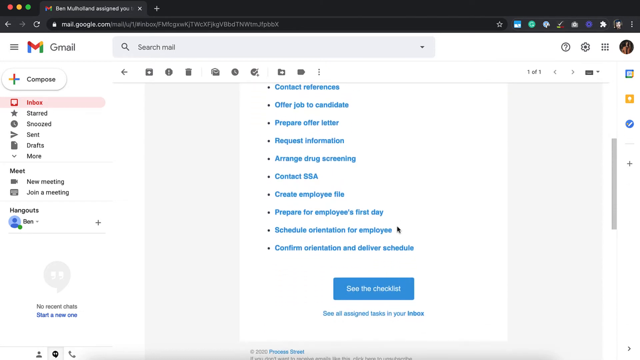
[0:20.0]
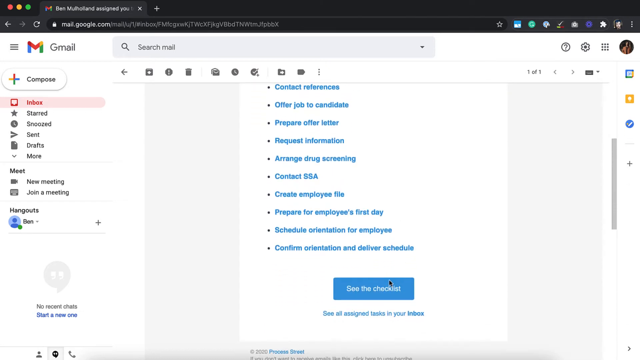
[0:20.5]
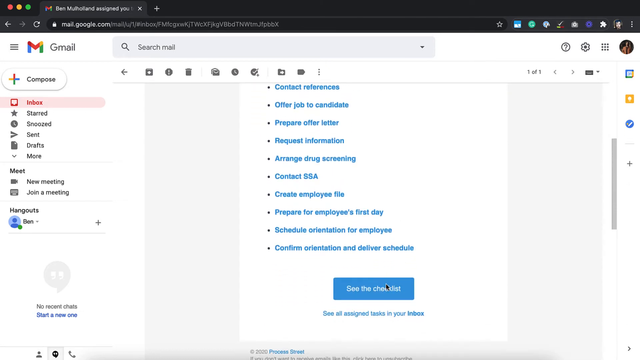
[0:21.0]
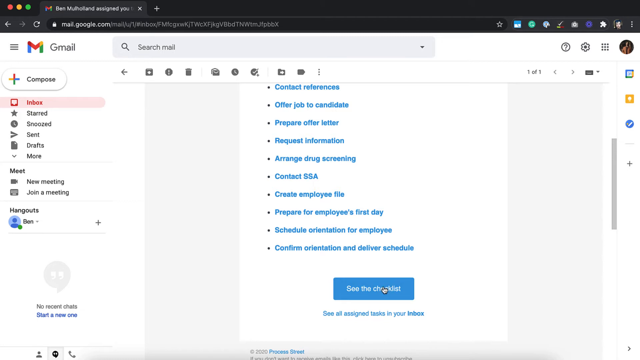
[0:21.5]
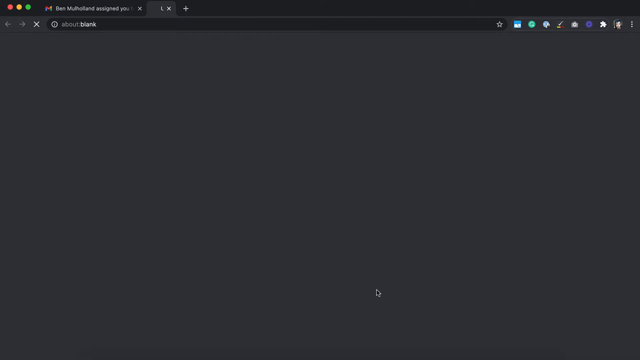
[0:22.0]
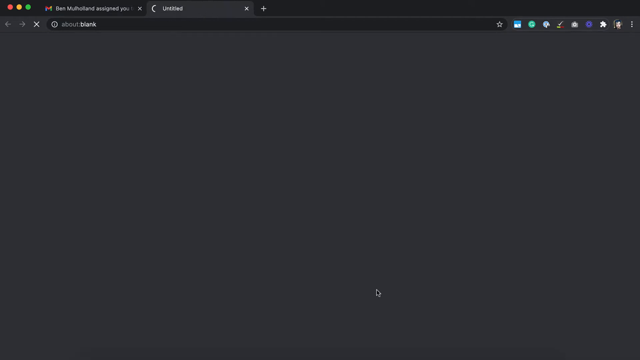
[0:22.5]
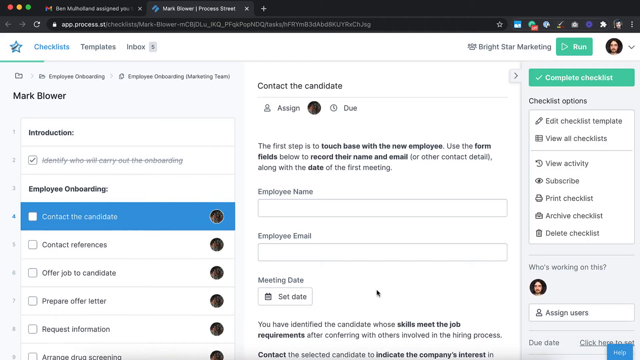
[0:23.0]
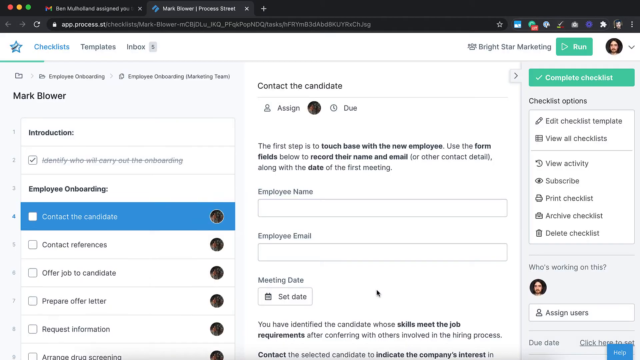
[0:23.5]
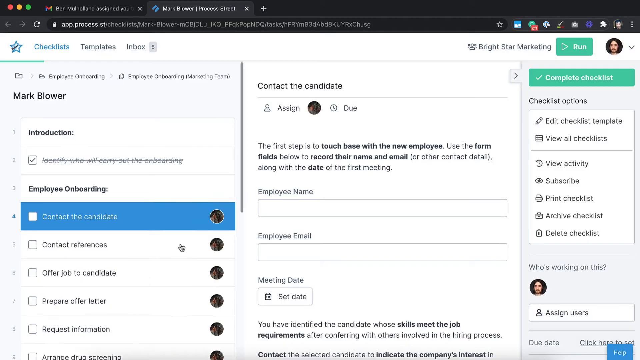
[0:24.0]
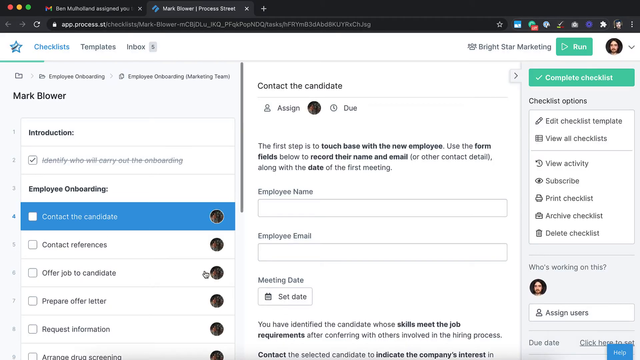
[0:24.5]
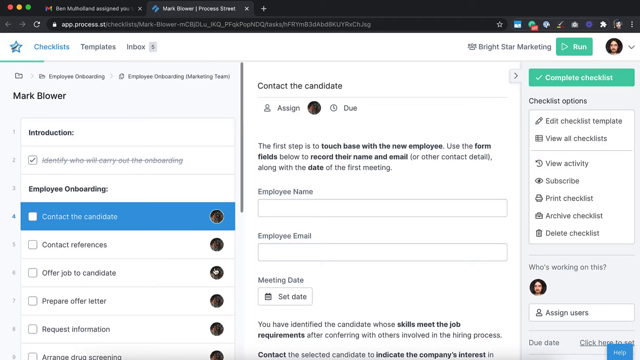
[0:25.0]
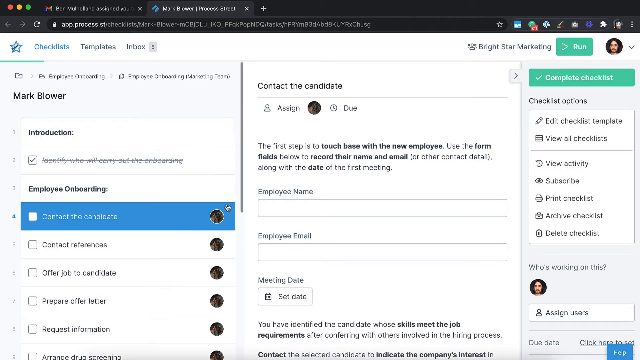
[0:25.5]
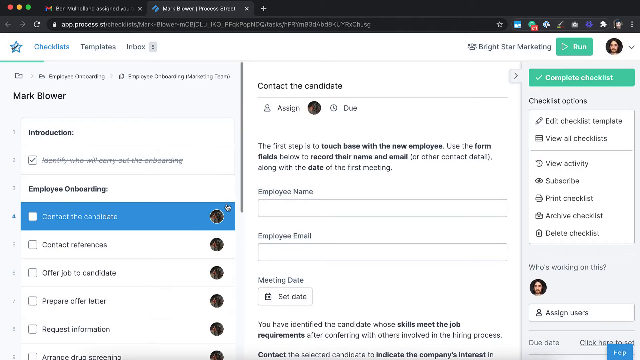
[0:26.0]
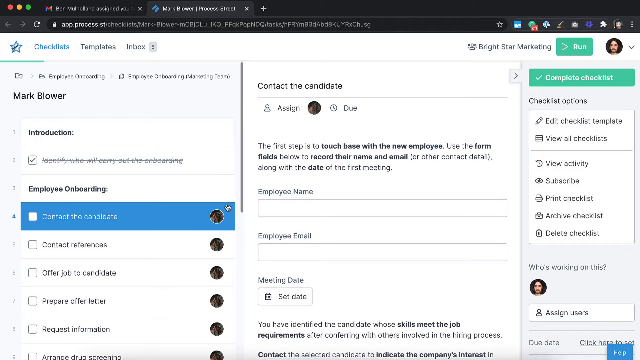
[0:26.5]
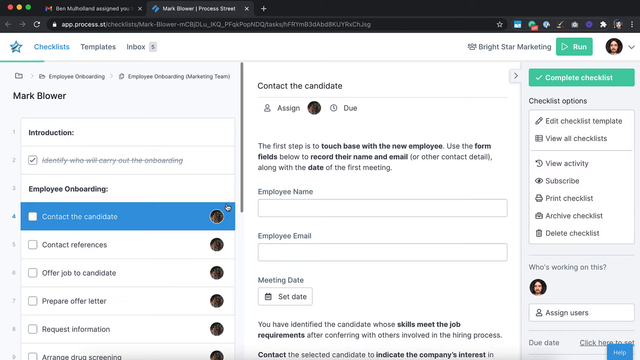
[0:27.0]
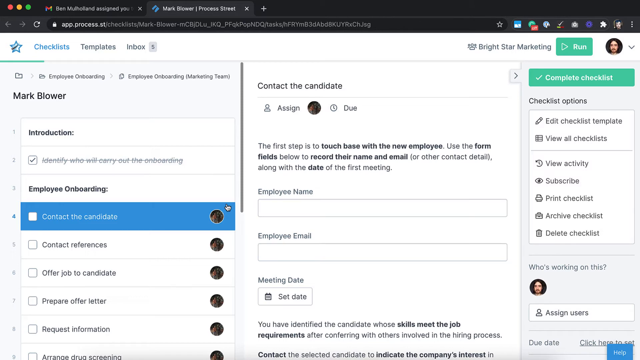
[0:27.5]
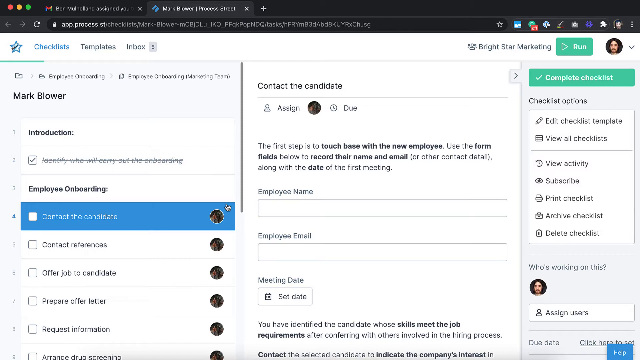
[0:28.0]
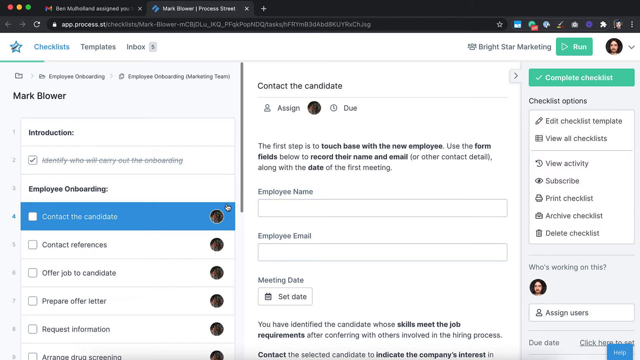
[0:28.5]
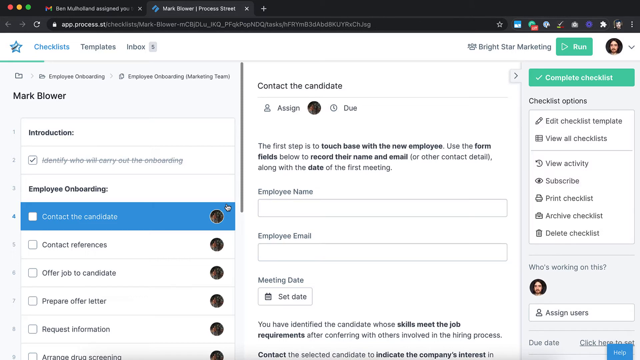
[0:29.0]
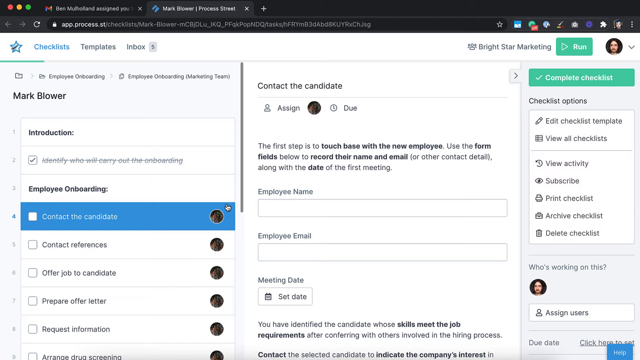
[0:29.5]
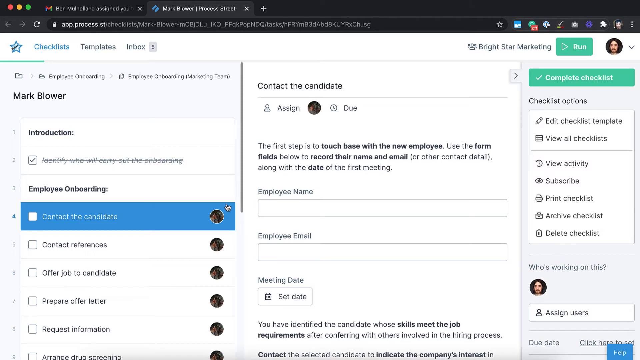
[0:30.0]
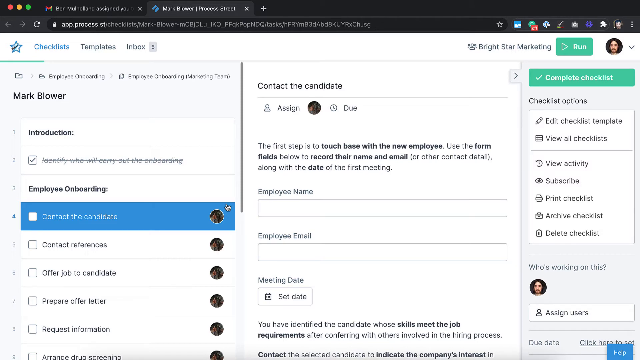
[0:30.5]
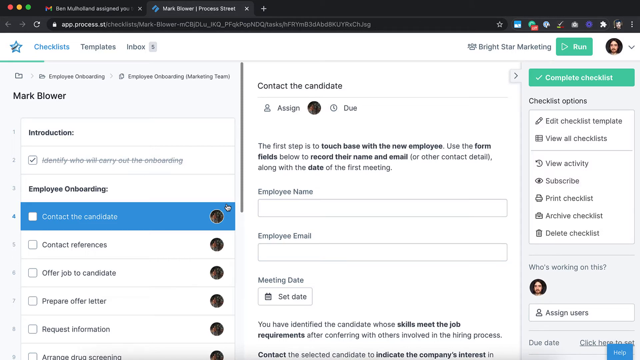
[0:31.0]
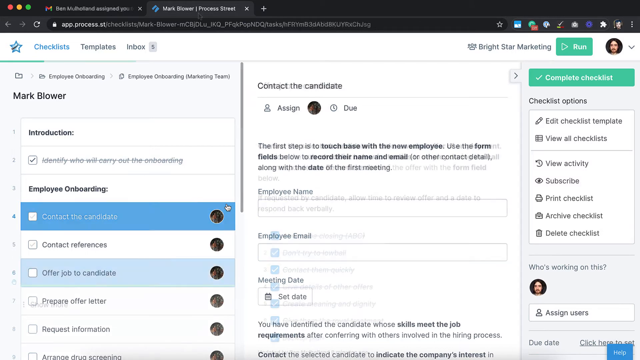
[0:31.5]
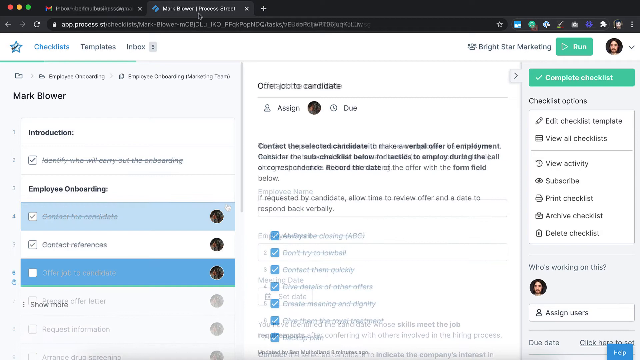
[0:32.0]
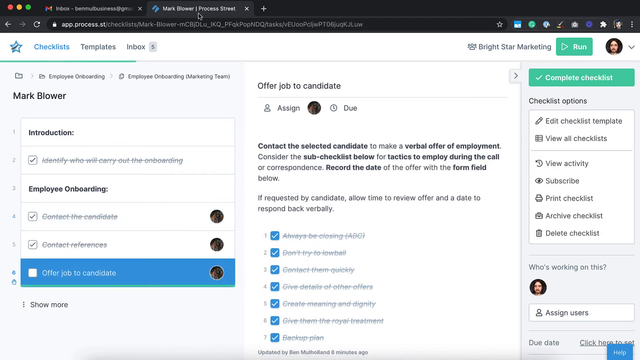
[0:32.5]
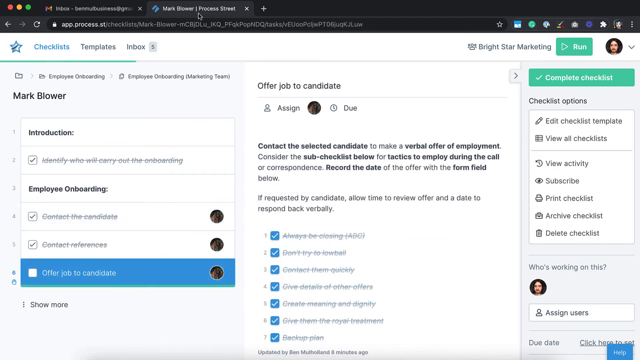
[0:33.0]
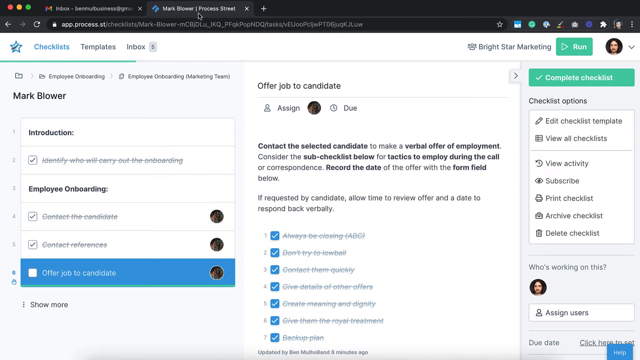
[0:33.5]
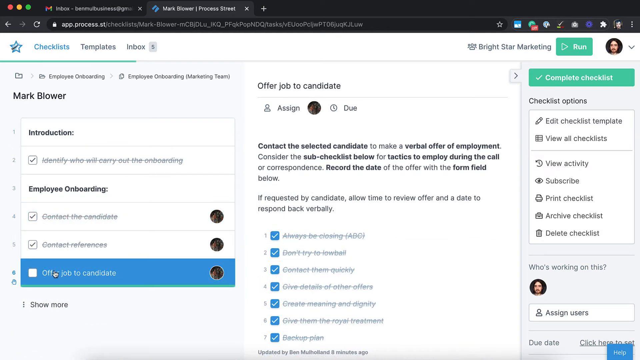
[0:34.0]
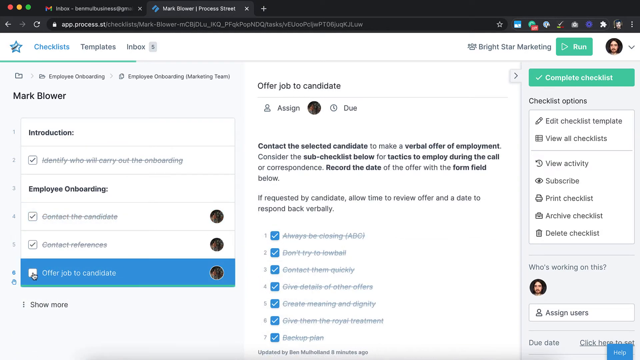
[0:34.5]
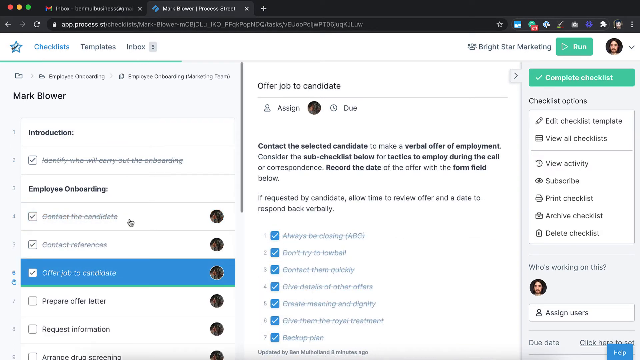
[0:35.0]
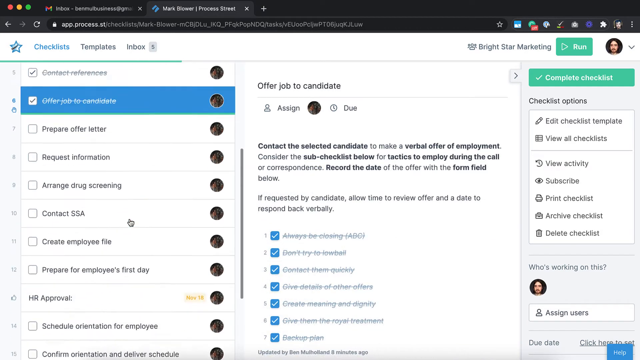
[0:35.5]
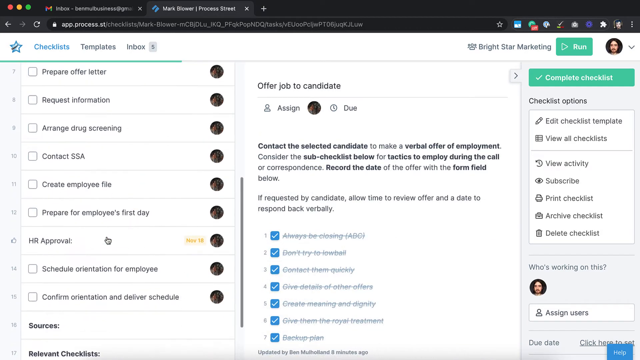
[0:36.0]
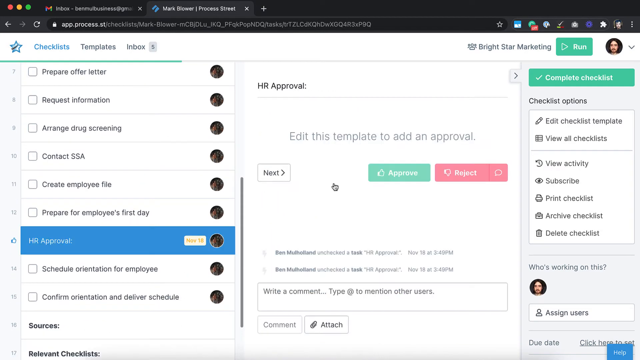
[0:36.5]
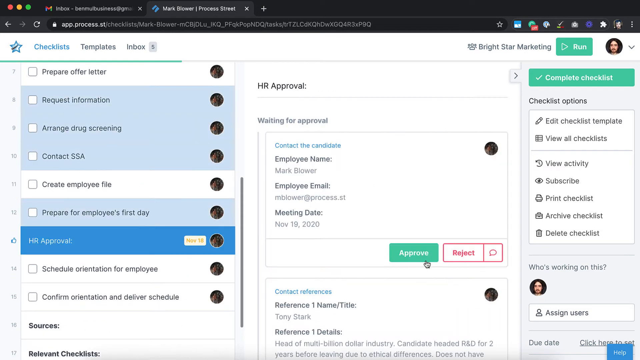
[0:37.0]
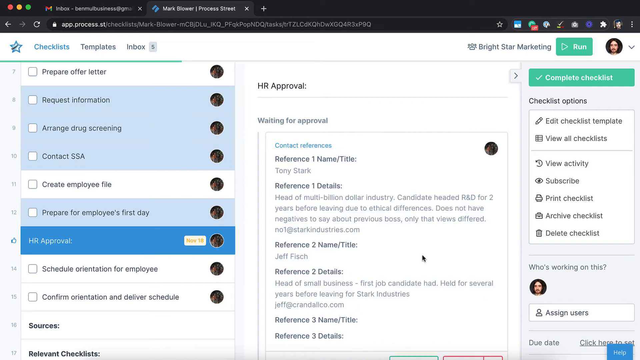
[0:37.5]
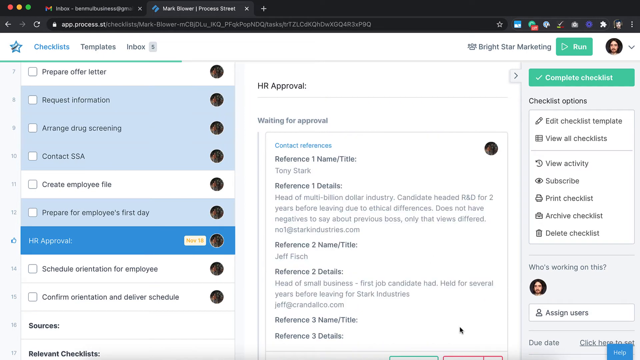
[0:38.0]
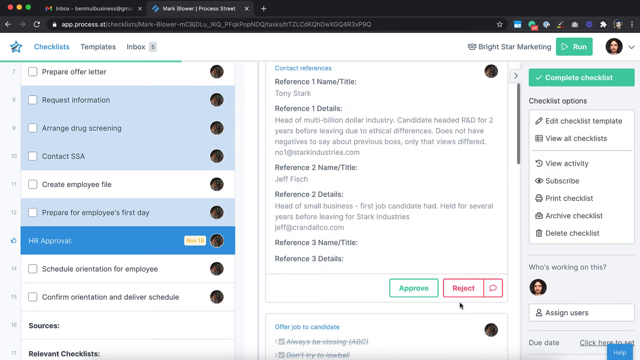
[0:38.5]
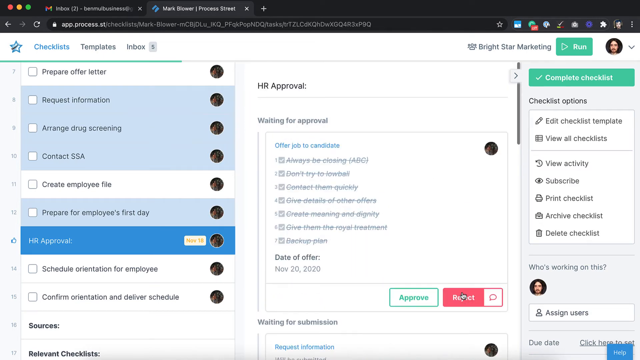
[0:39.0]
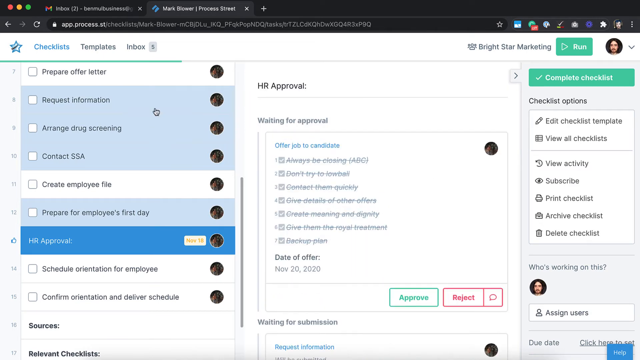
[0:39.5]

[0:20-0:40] A web browser version of Gmail shows an opened email, and the person scrolls up and down the page. At the bottom is a blue "see the checklist" button, with "see all assigned tasks in your inbox" written underneath it. The person clicks the button, which opens the checklists tab of the app.process.st website in a new tab. One of the tasks on the checklist is "offer job to candidate". The person then goes back to the Gmail tab. This is some type of promotional video for this checklist app integrated with Gmail.